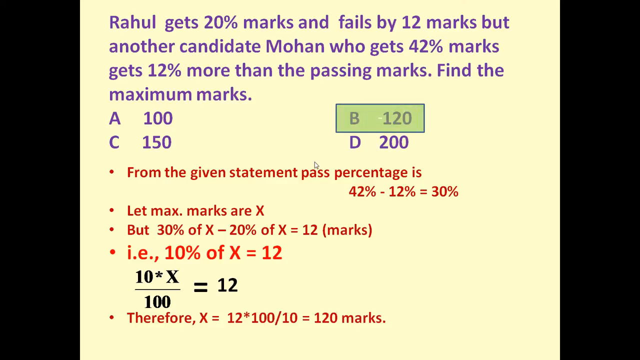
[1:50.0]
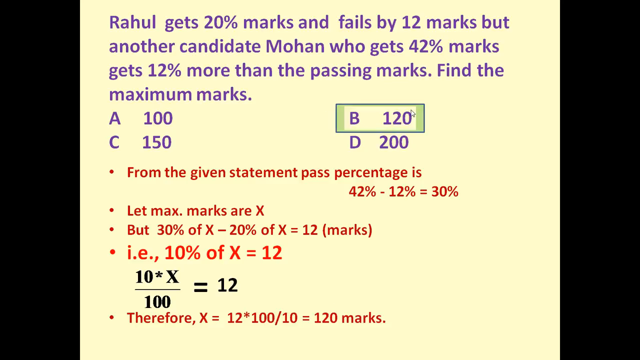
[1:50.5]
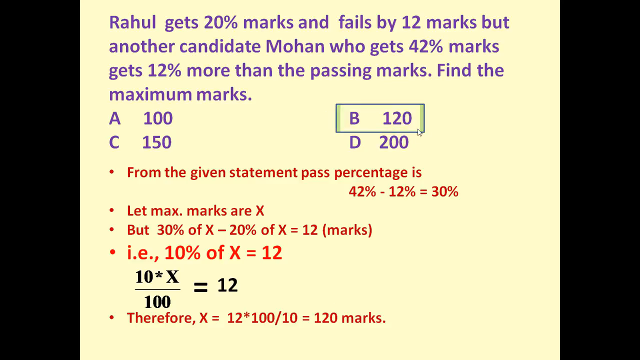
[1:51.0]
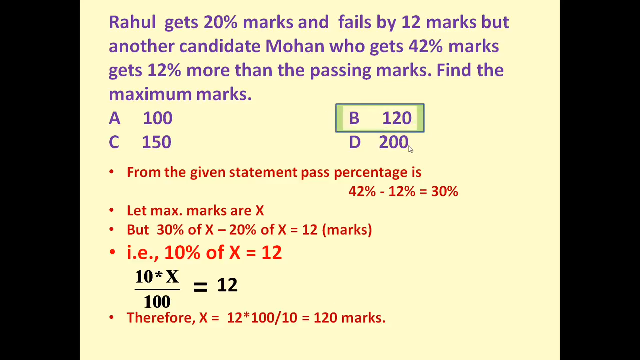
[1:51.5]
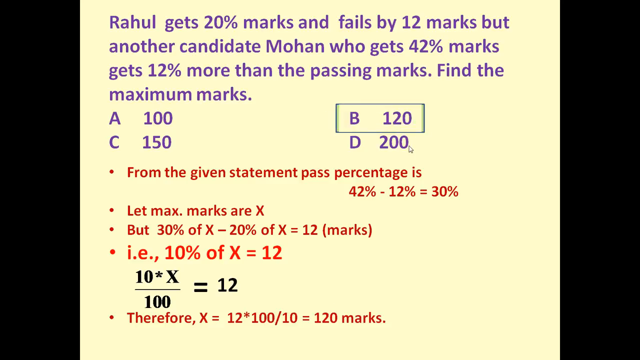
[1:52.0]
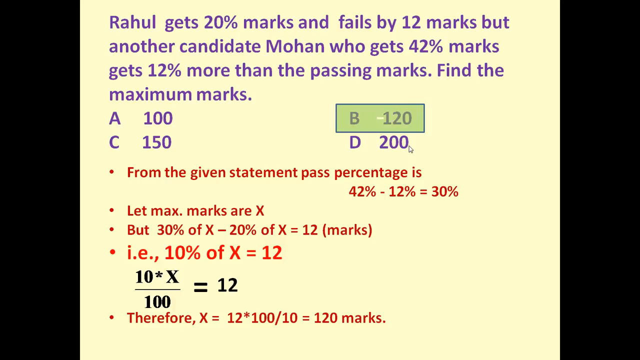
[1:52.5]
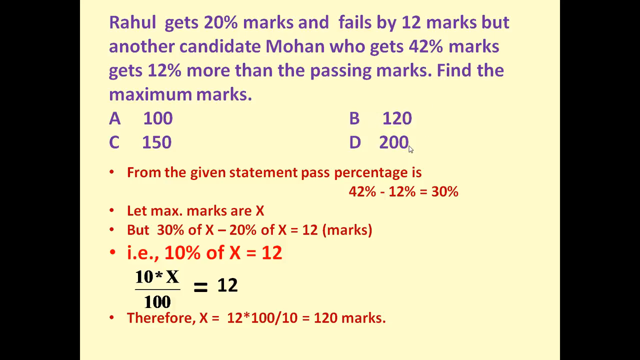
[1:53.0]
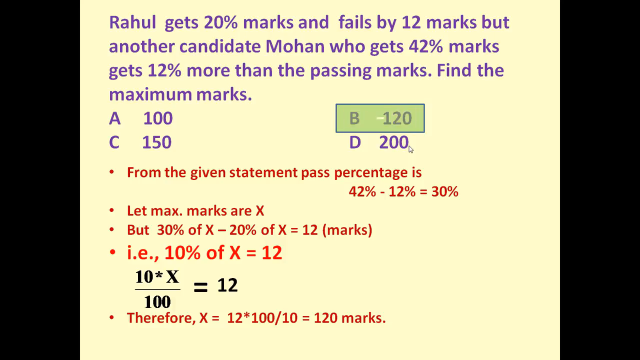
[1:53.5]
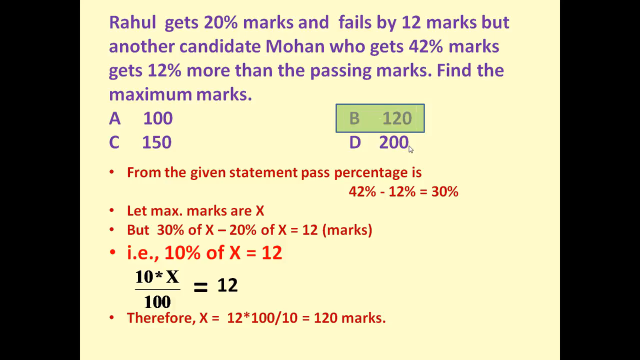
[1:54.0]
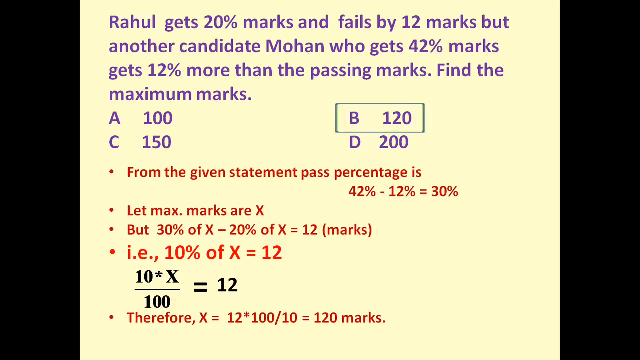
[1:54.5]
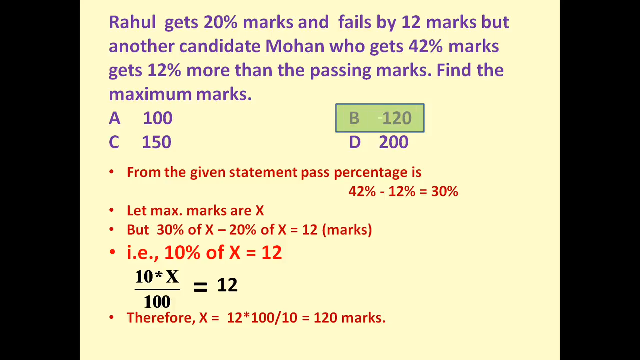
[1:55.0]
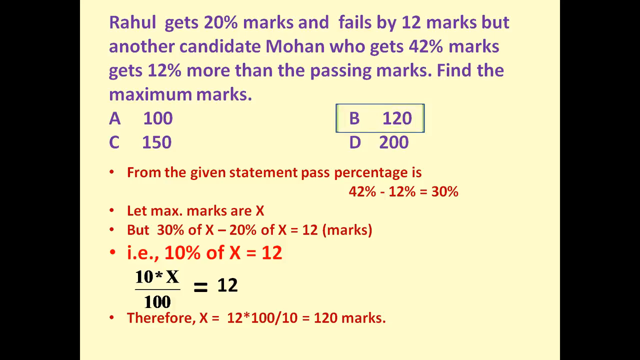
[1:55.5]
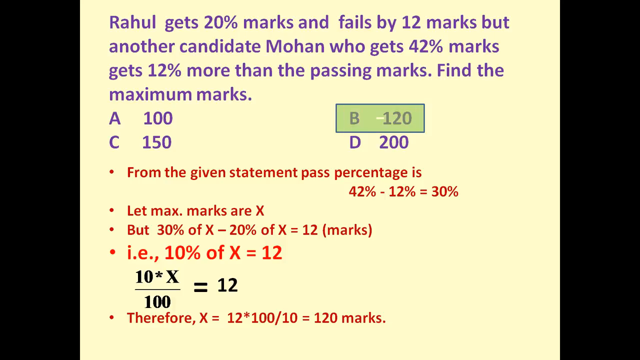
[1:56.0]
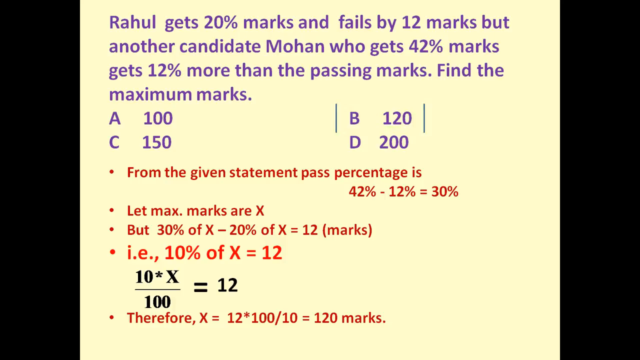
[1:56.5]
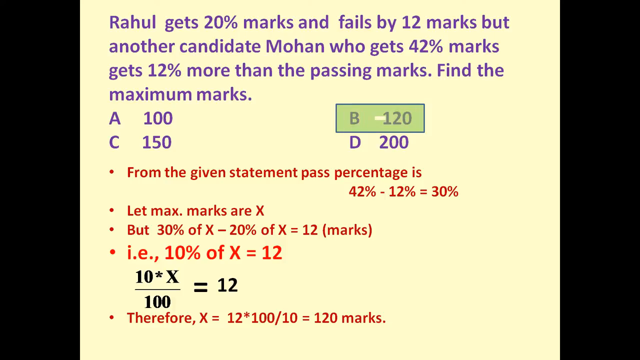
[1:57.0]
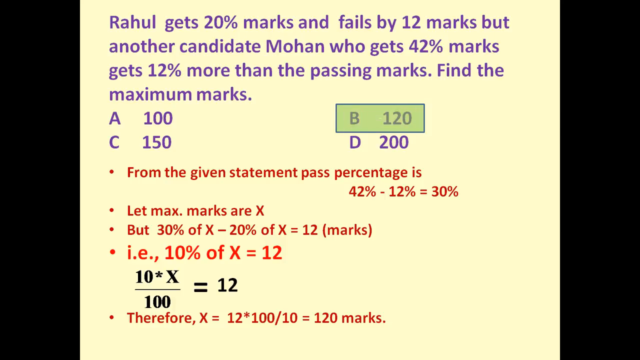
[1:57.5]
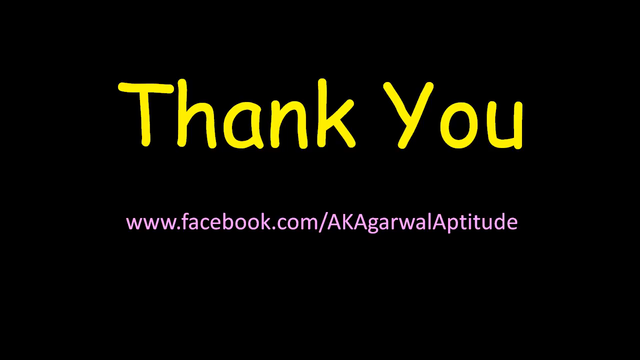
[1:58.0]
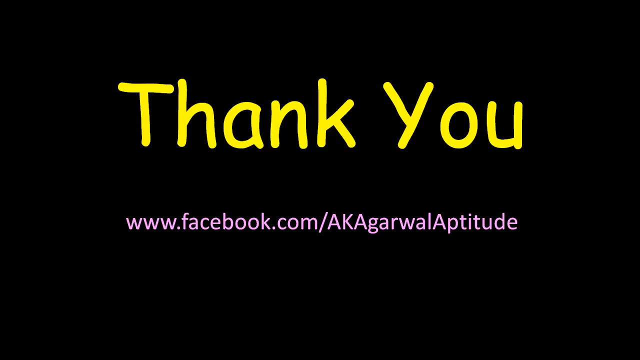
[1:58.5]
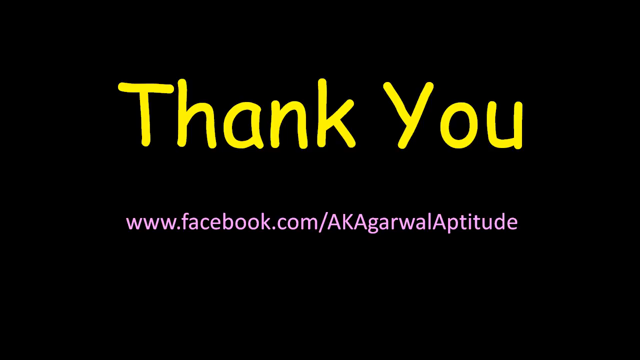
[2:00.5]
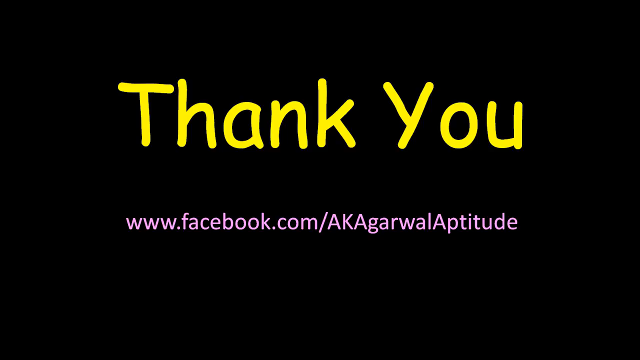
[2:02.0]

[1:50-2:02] The problem and its options A 100, B 120, C 150, D 200 are shown with the worked solution: the pass percentage is 42% minus 12% equals 30%, from candidate Mohan; with the maximum marks as X, 30% of X minus 20% of X equals 12, so 10% of X equals 12, 10 multiplied by X divided by 100 equals 12, and X equals 12 multiplied by 100 divided by 10 equals 120 marks. Option B, 120 marks, is the right answer. The video ends with a thank-you and a Facebook address for A.K. Agarwal aptitudes.